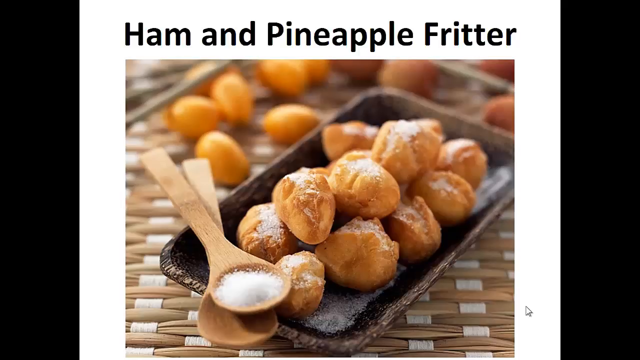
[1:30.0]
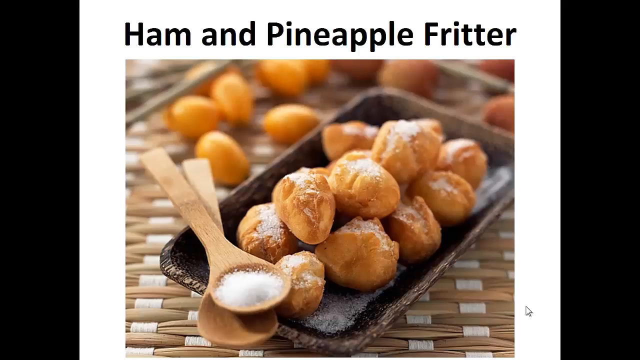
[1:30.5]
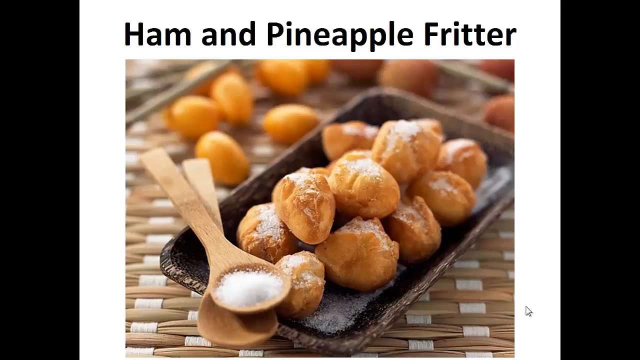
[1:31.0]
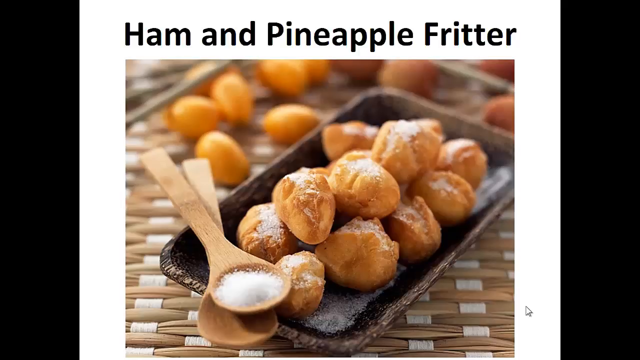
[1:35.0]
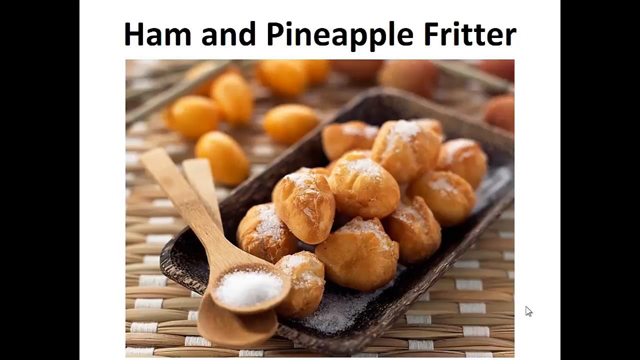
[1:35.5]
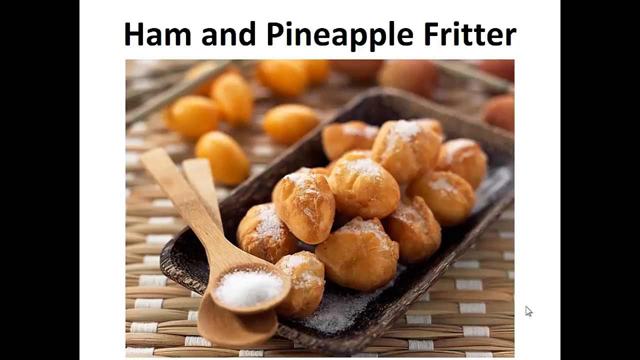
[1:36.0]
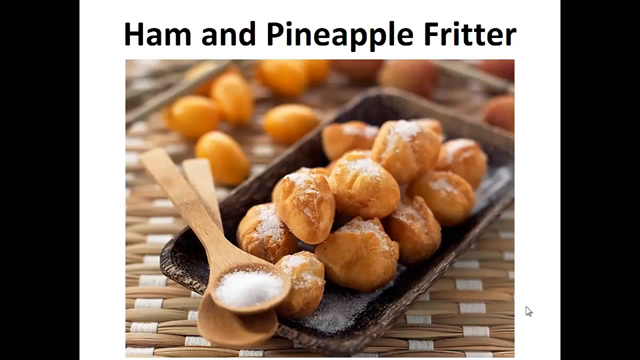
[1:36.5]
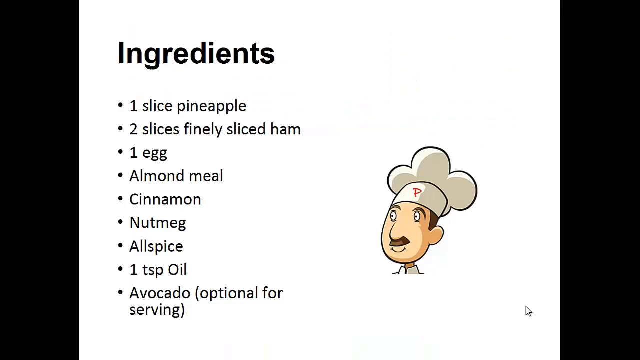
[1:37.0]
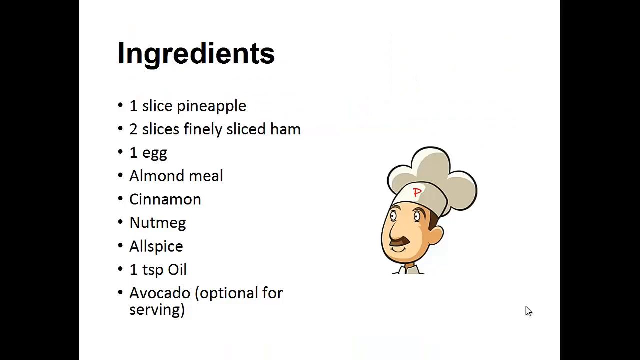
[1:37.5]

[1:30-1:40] A photo shows fritters on a woven table or mat, with two light brown wooden spoons on top of a dark brown tray. The top spoon has sugar in it, and the fritters in the tray have sugar toppings. More fritters are laying around on the woven mat. Above the image, bold black text reads "ham and pineapple fritter". The next close-up shows a bold black heading, "ingredients", followed by a list of points: "one sliced pineapple", "two slices finely sliced ham", "one egg", "almond meal", "cinnamon", "nutmeg", "allspice", "one teaspoon oil" and "avocado (optional for serving)". On the right is a drawing of a man wearing a chef hat with a red "P" on it; he has a brown mustache, brown hair and brown eyebrows, and the collar of a white shirt shows at his neck.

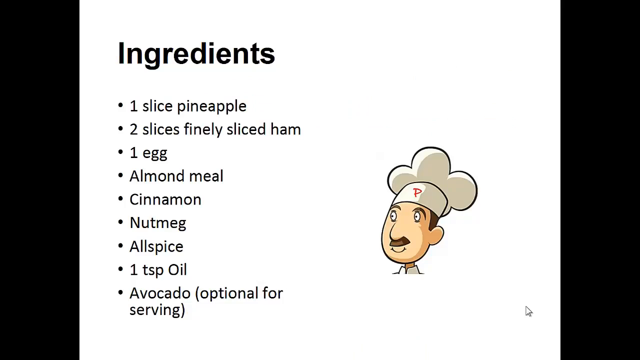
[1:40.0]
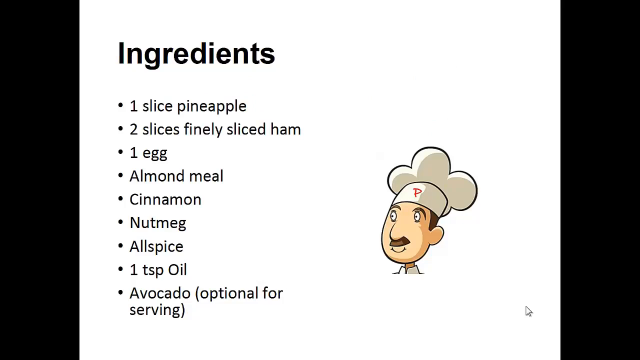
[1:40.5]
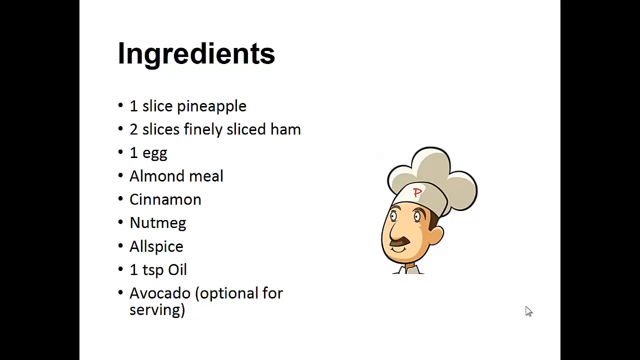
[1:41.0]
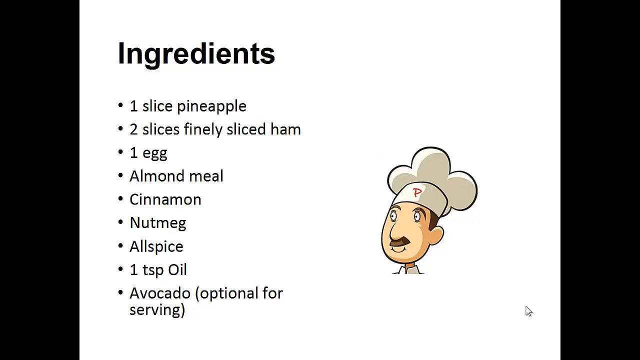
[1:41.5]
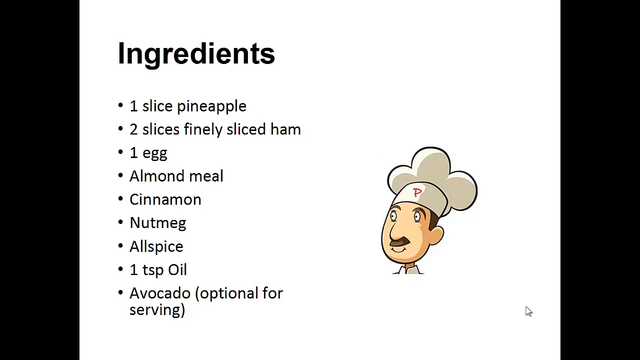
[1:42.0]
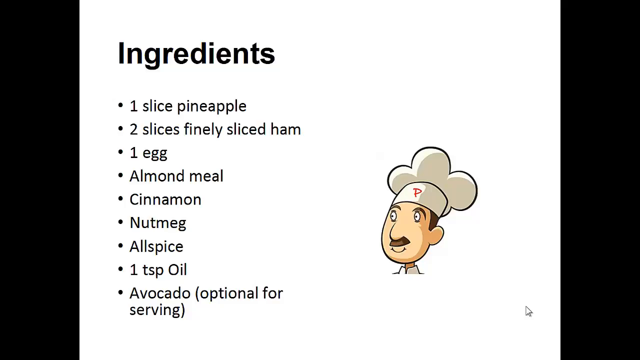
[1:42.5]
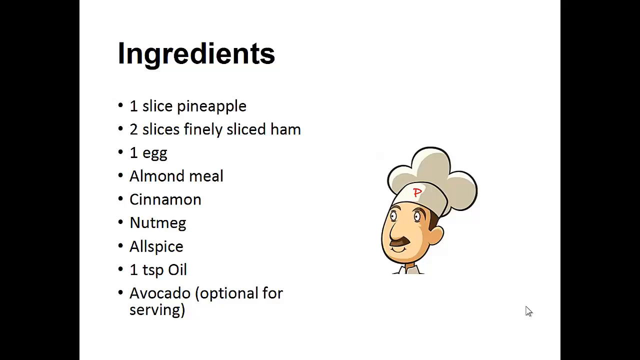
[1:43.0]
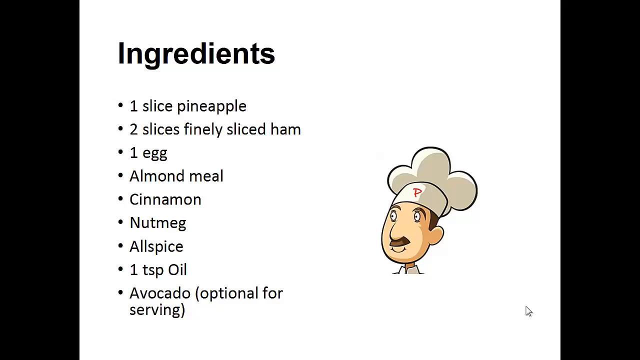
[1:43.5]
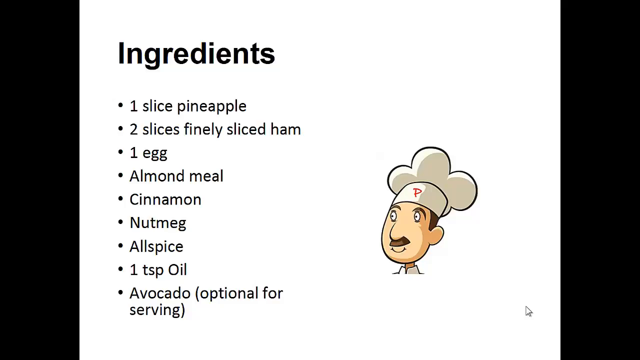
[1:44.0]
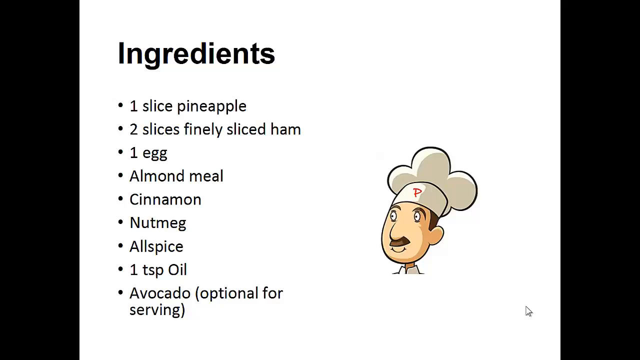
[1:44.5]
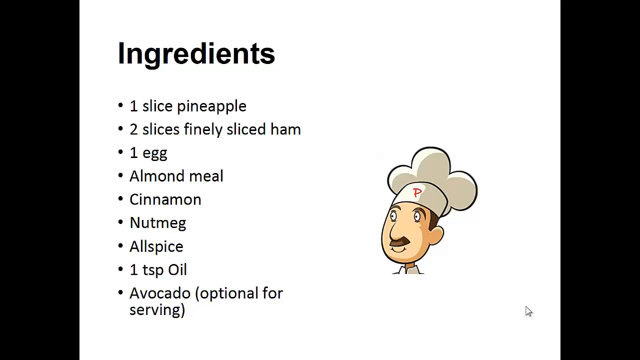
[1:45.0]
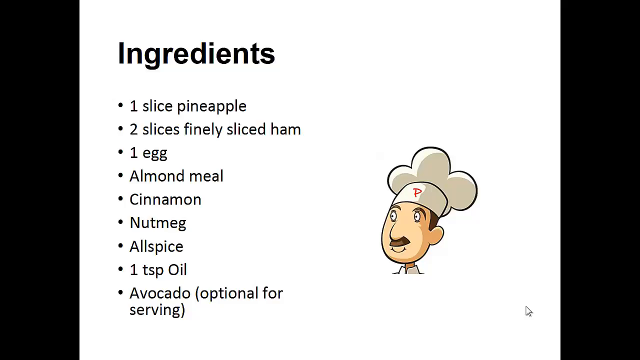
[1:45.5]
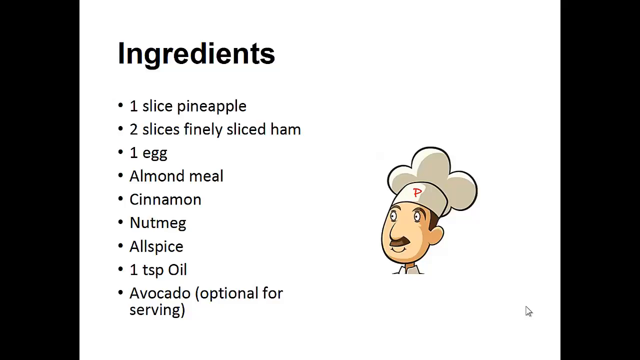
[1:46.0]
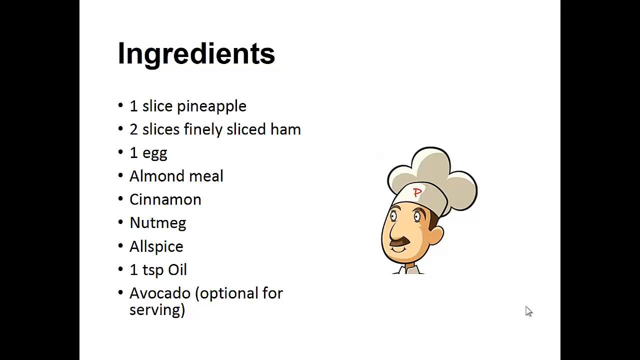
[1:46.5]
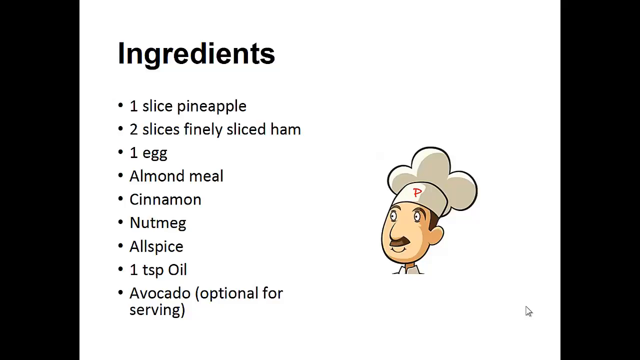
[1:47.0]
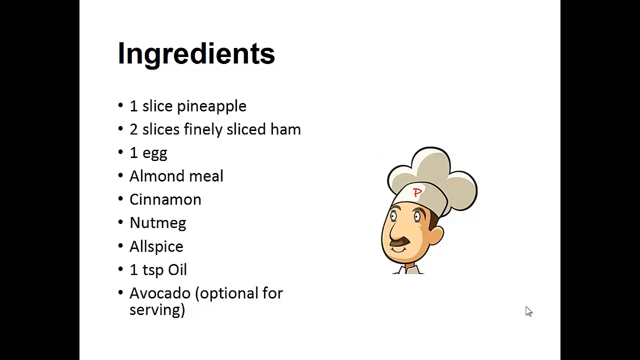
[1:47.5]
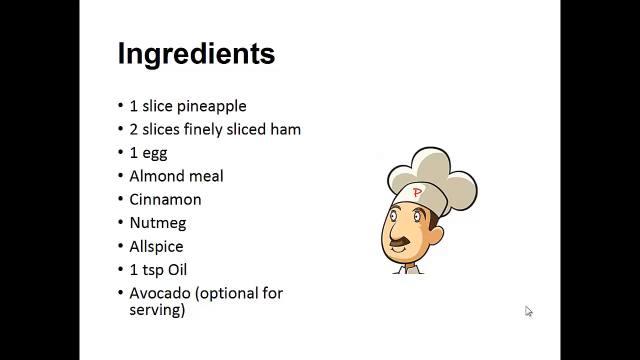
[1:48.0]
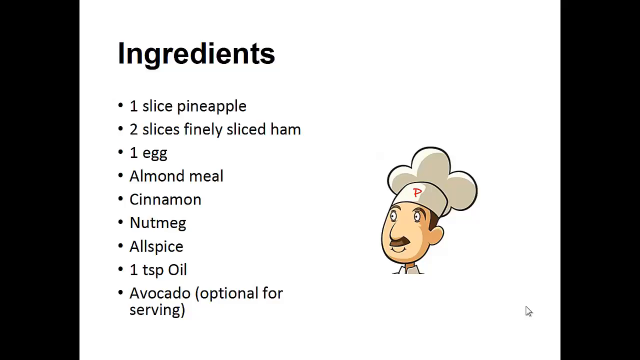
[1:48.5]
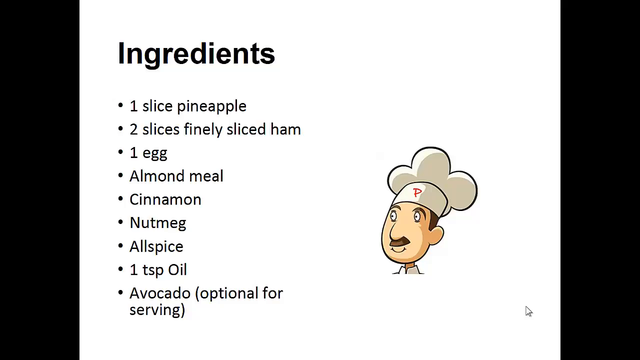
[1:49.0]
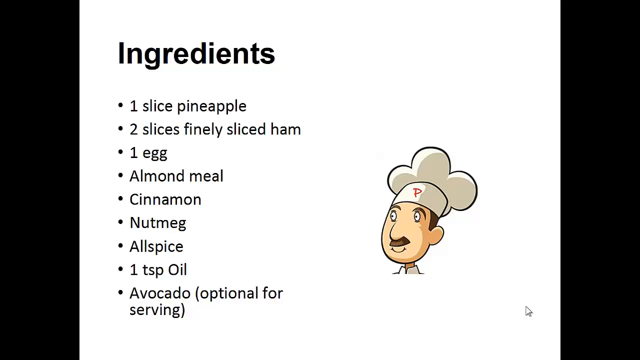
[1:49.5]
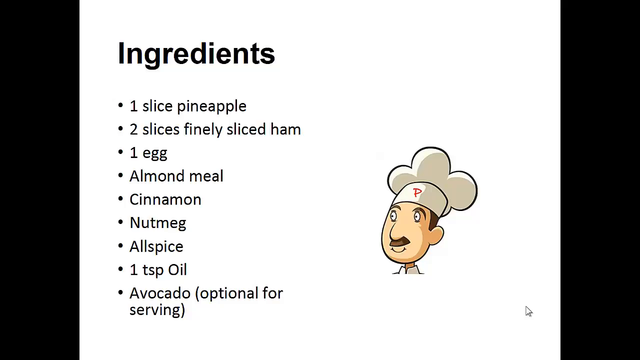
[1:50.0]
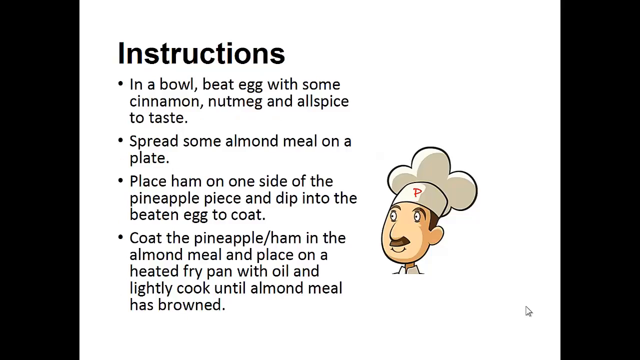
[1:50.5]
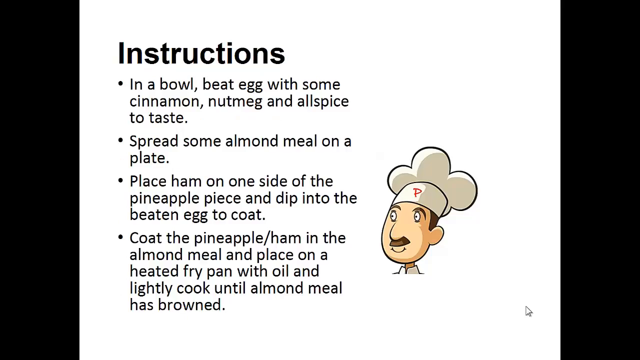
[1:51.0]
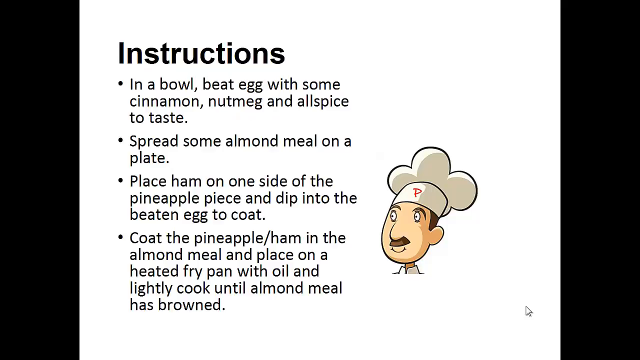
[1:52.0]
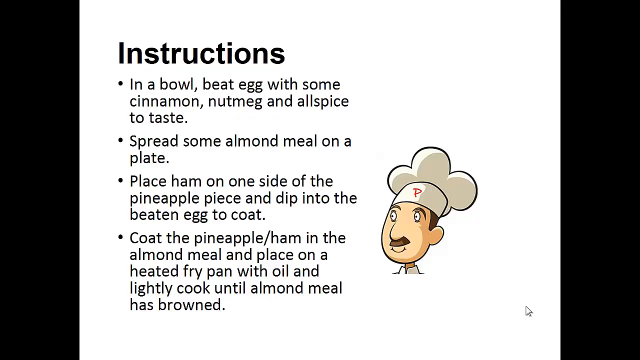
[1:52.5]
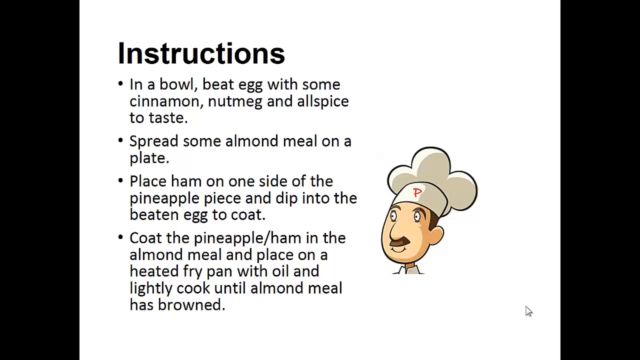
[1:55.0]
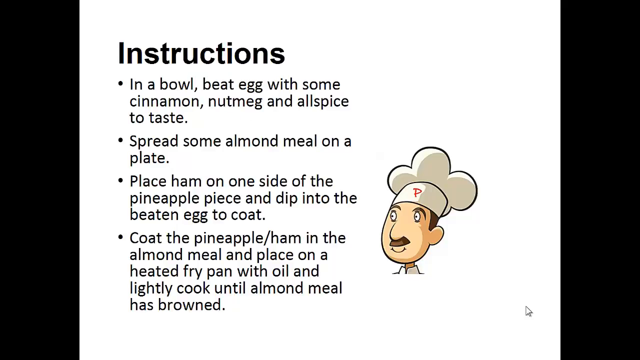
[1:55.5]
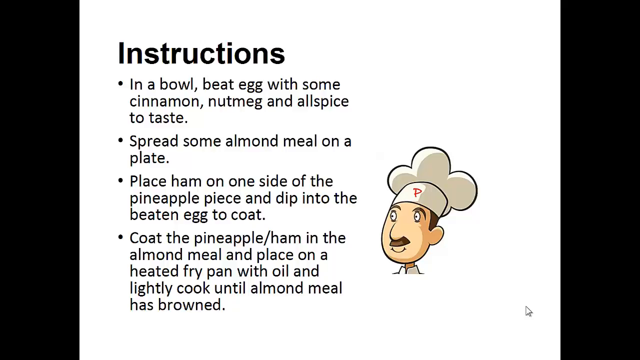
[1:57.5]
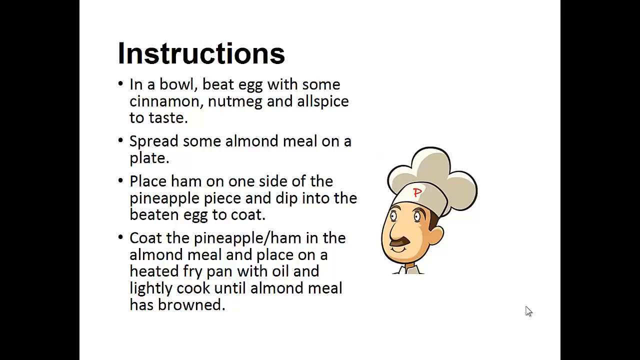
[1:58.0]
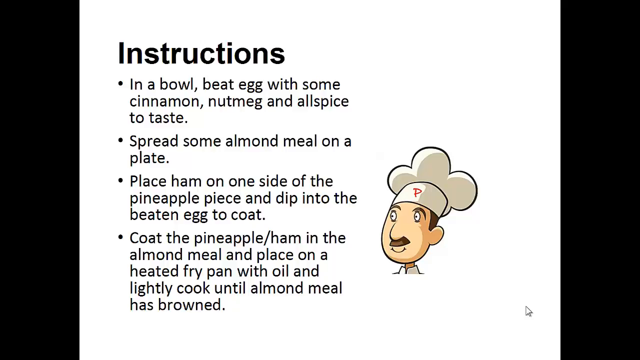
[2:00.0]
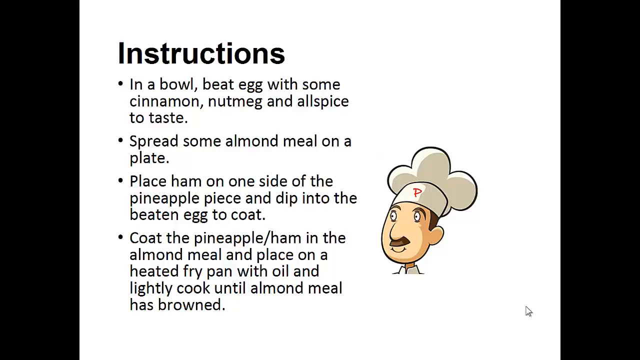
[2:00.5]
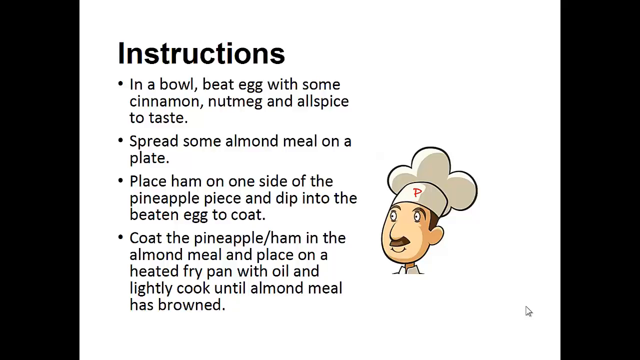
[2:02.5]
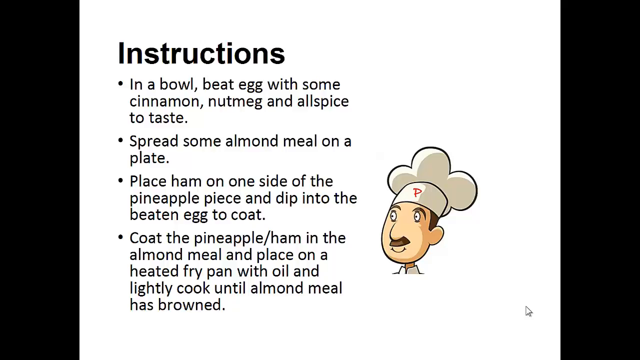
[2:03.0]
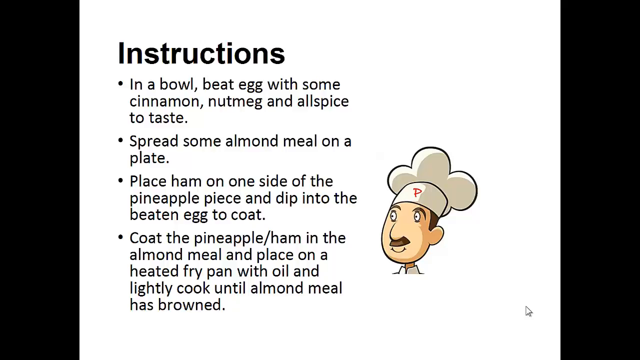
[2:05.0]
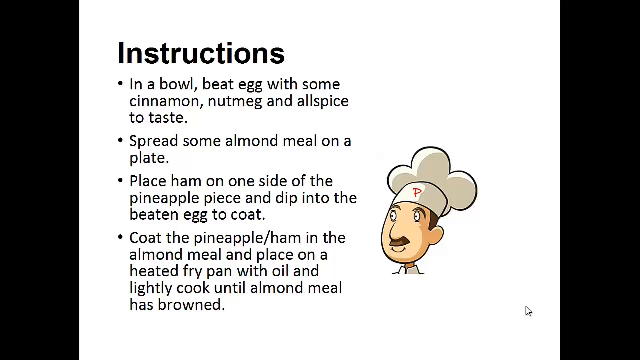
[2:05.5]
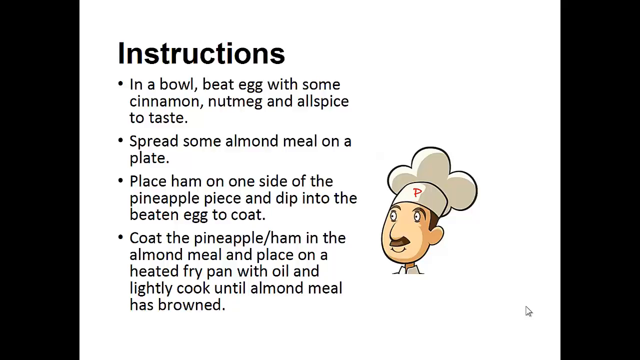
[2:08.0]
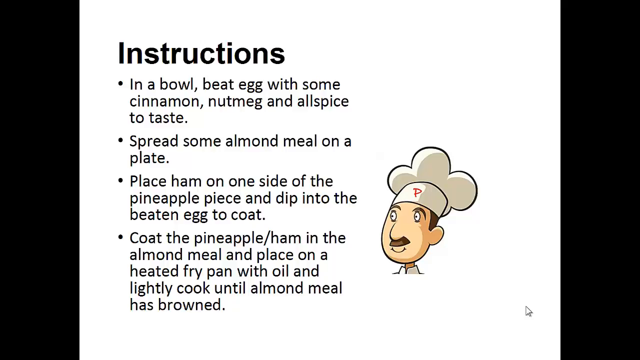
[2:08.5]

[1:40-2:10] The heading "ingredients" has nine points beneath it, reading "one slice pineapple", "two slices finely sliced", "one egg", "almond milk", "cinnamon", "nutmeg", "allspice", "one tablespoon oil" and "avocado (optional for serving)". A mouse cursor is at the bottom right, and on the center right side, next to the ingredients, is a drawing of a chef wearing a chef hat. The next close-up shows a bold black heading, "instructions", with four points beneath it, including "in a bowl beat egg with some cinnamon nutmeg and allspice to taste", "spread some almond meal on a plate", and "place on a heated frypan with oil" until the almond meal has browned. There is also an image of a chef with a white and somewhat grayish chef cap, a moustache, brown hair and brown eyebrows.